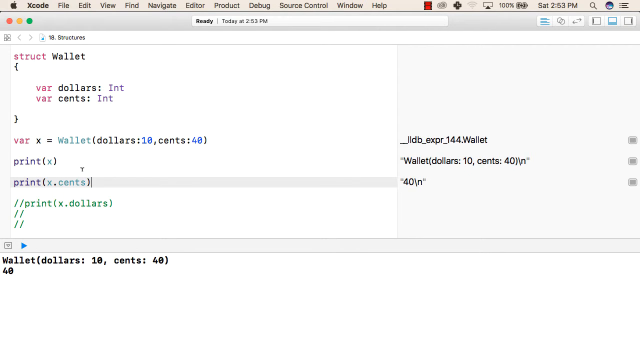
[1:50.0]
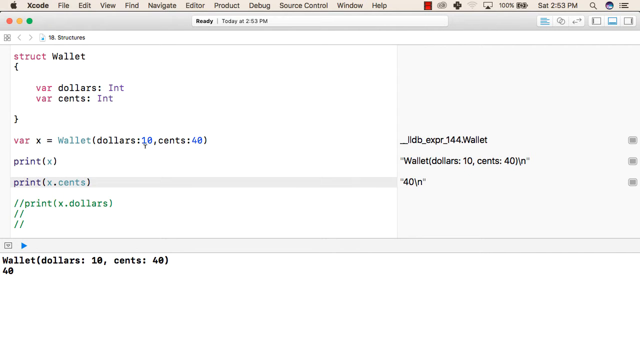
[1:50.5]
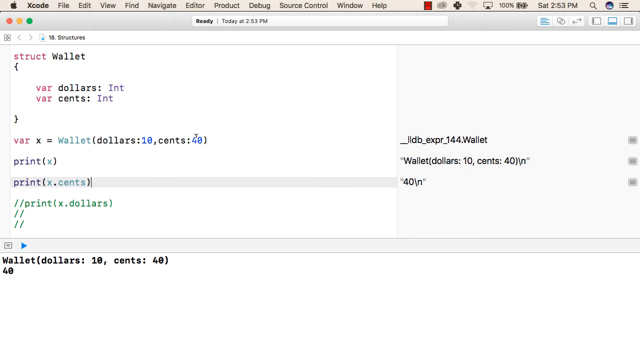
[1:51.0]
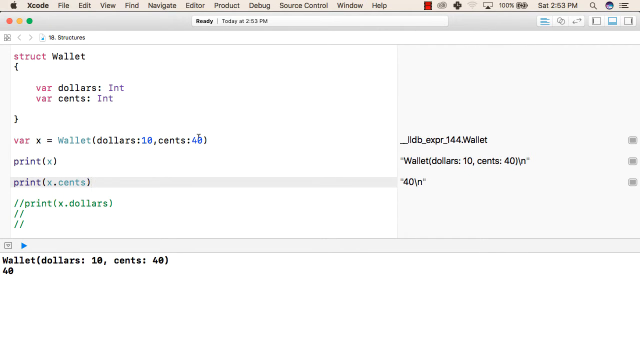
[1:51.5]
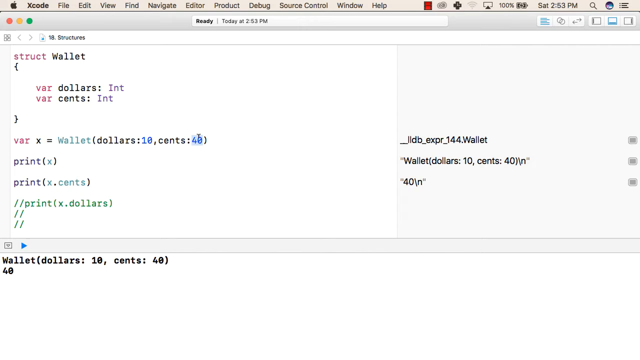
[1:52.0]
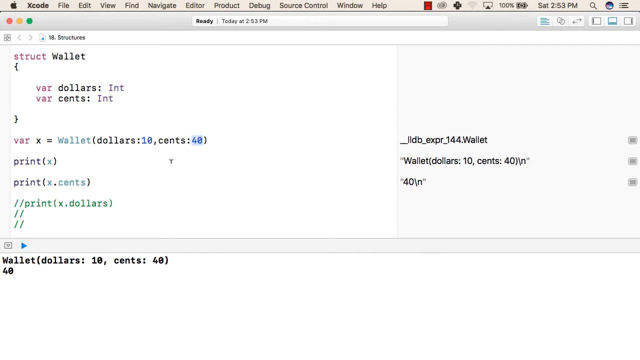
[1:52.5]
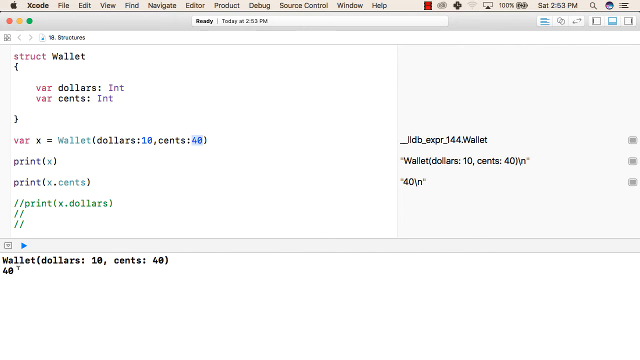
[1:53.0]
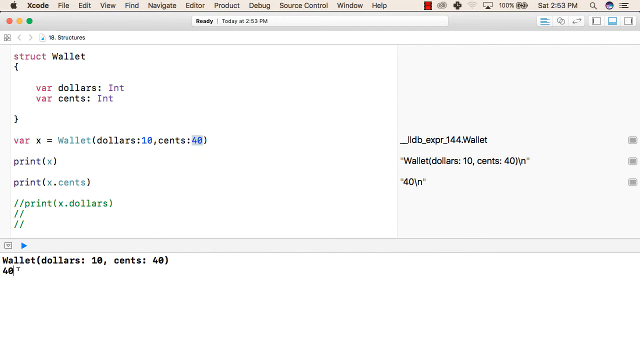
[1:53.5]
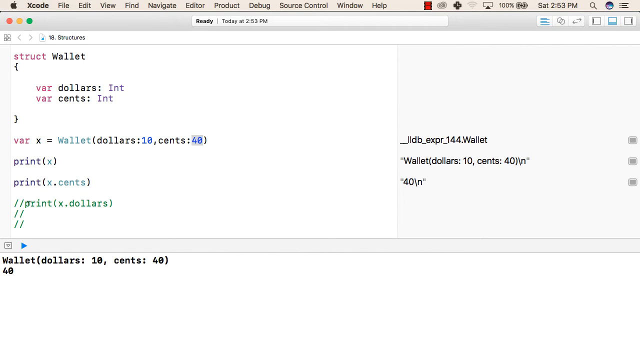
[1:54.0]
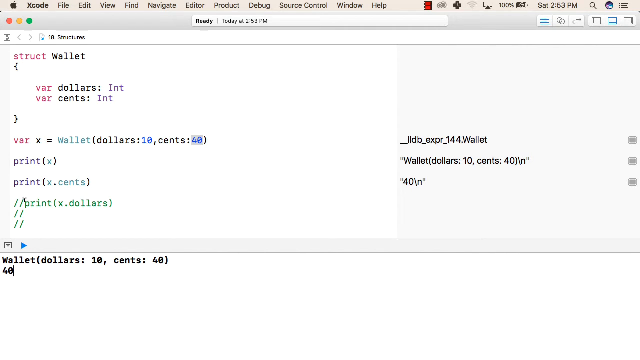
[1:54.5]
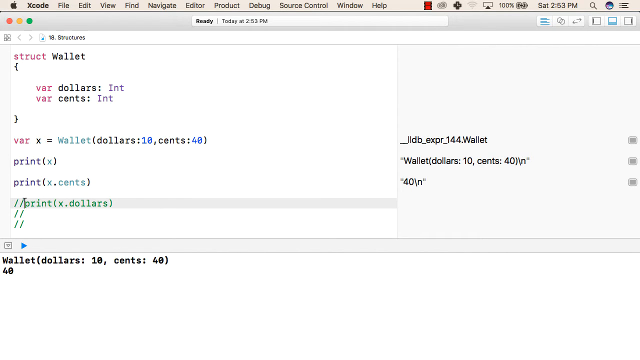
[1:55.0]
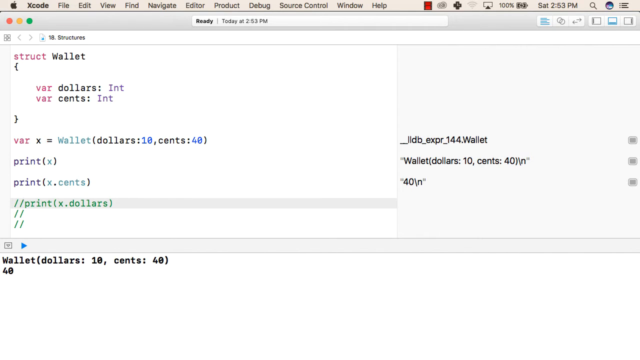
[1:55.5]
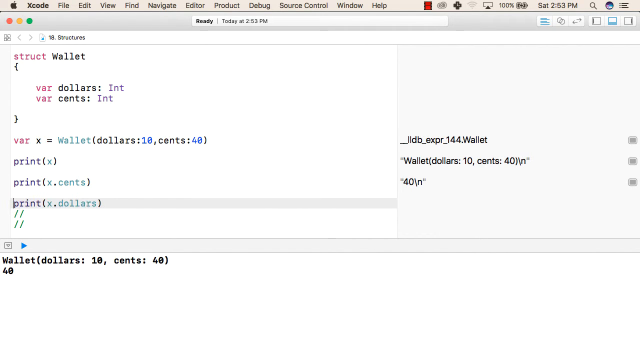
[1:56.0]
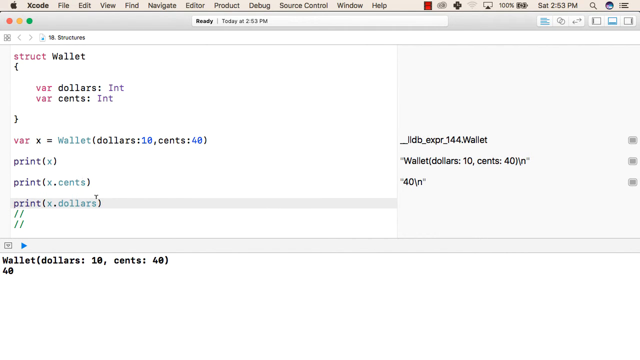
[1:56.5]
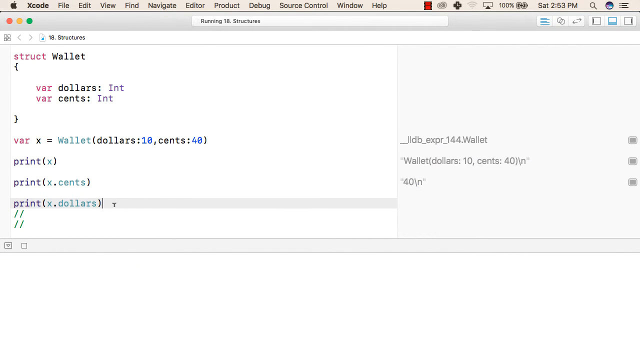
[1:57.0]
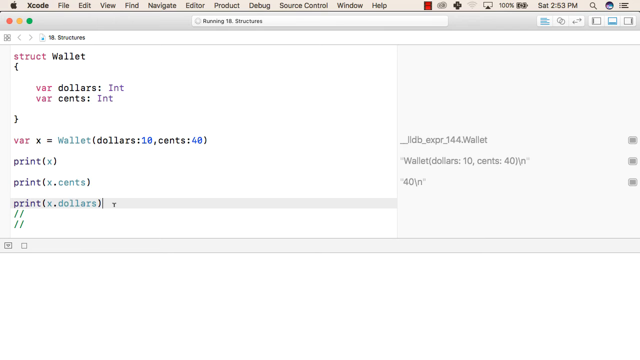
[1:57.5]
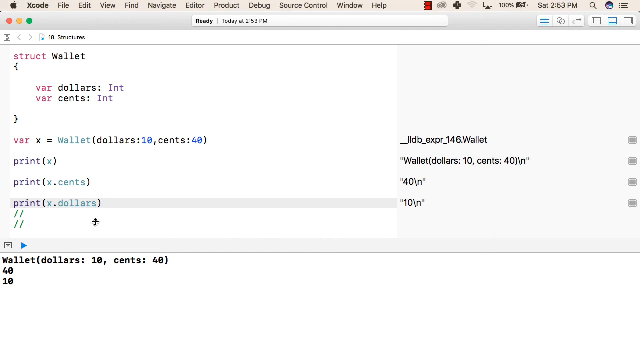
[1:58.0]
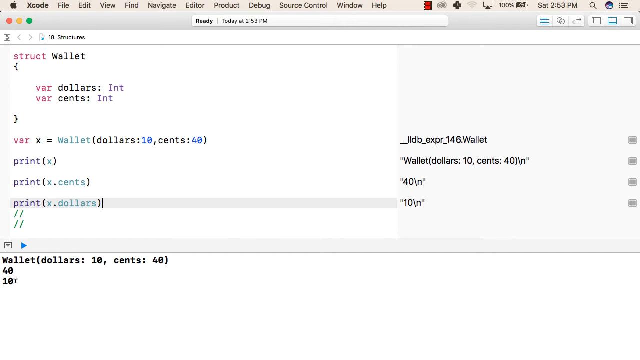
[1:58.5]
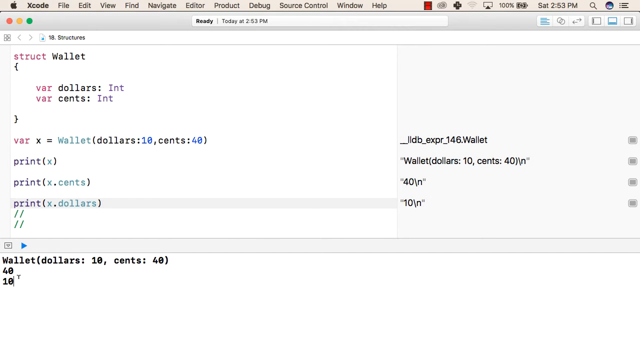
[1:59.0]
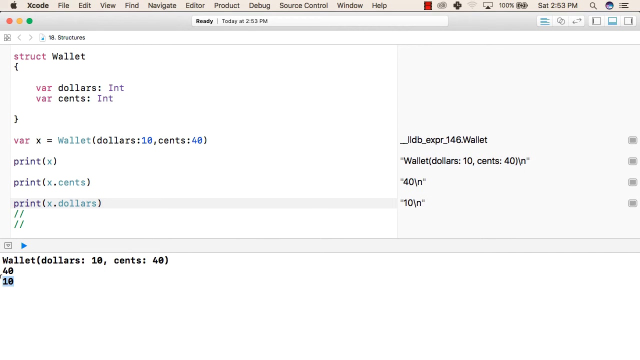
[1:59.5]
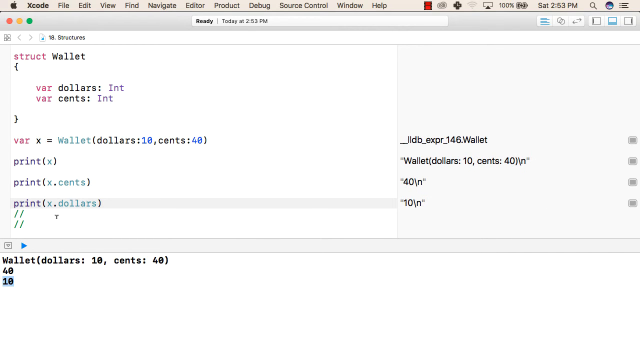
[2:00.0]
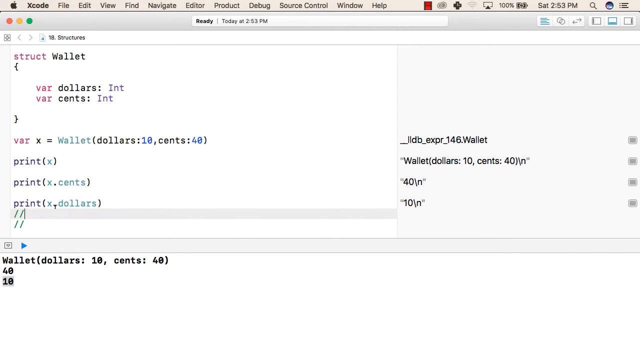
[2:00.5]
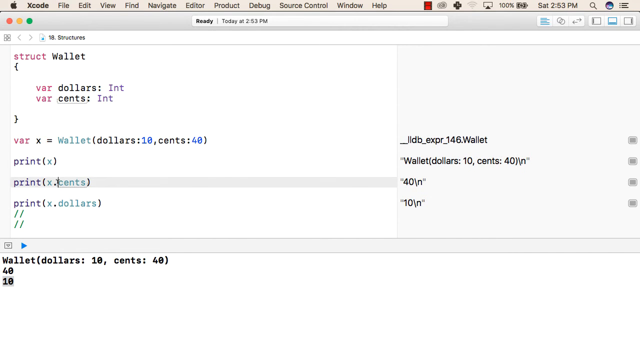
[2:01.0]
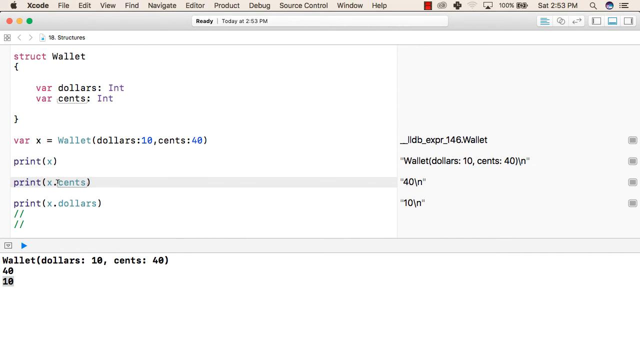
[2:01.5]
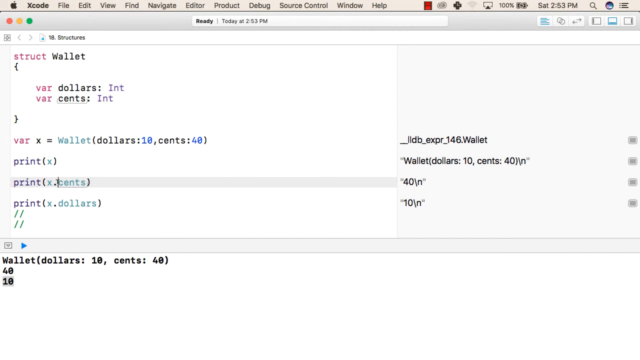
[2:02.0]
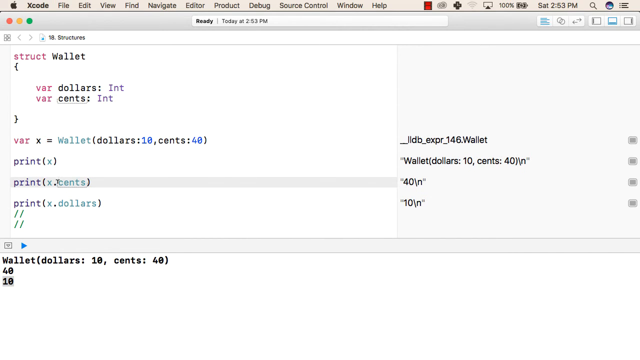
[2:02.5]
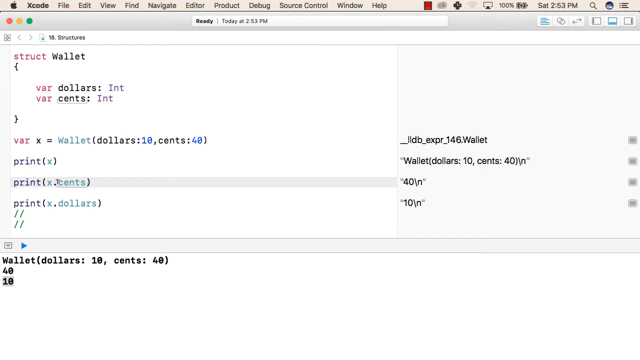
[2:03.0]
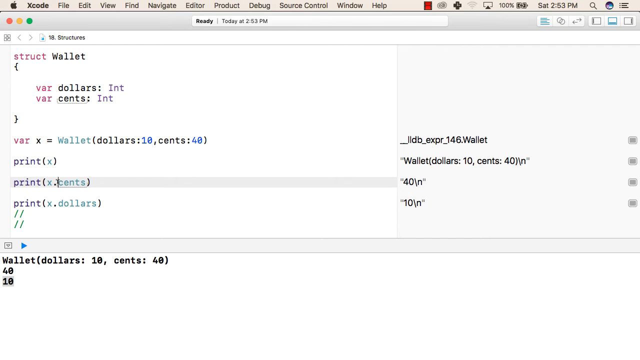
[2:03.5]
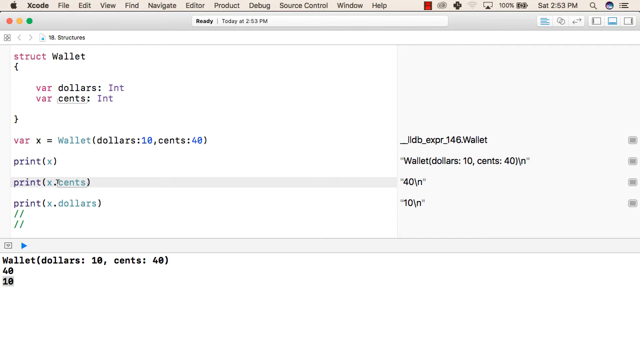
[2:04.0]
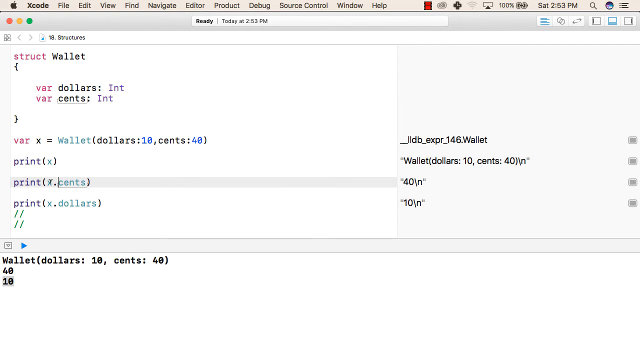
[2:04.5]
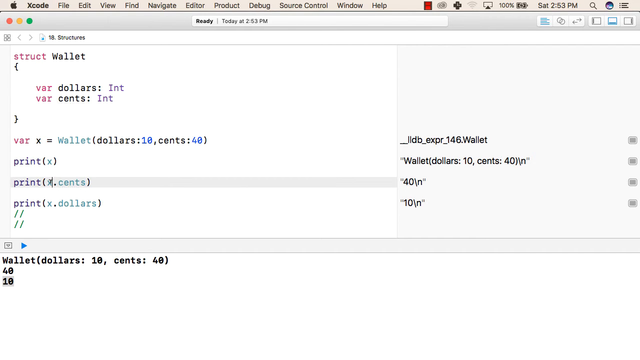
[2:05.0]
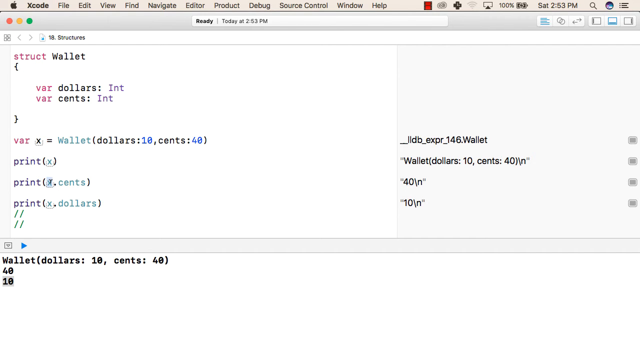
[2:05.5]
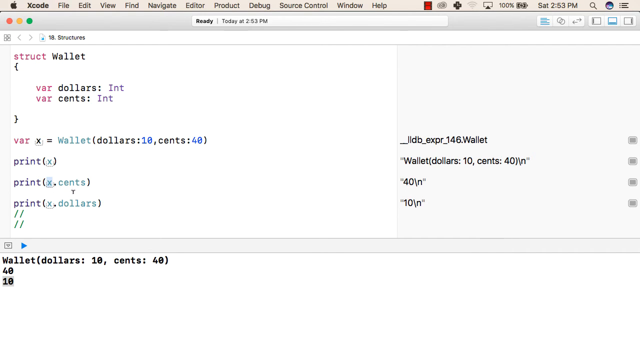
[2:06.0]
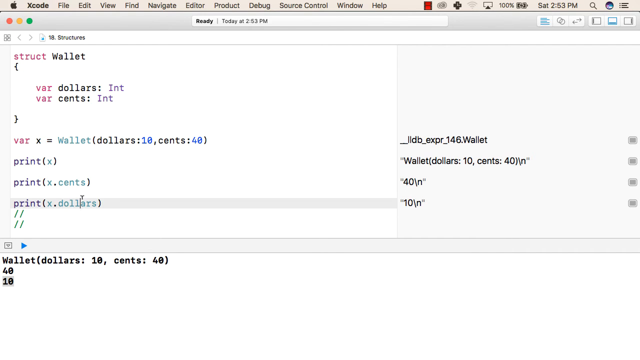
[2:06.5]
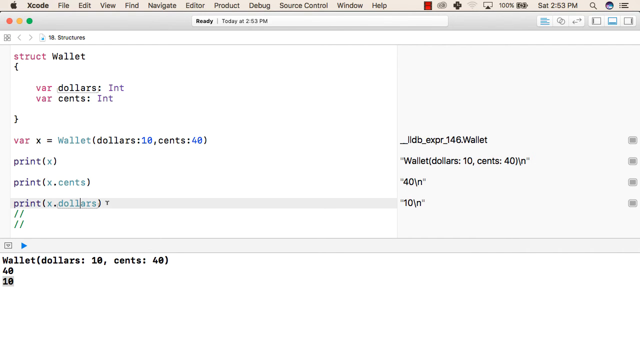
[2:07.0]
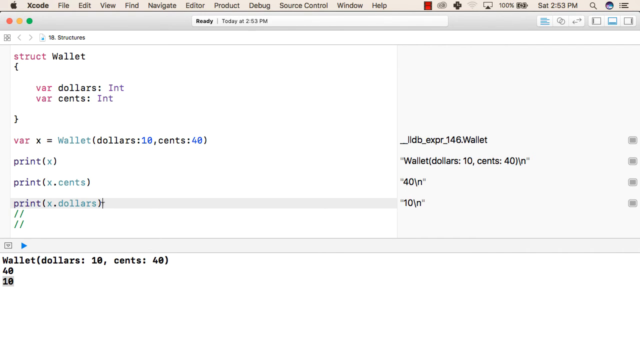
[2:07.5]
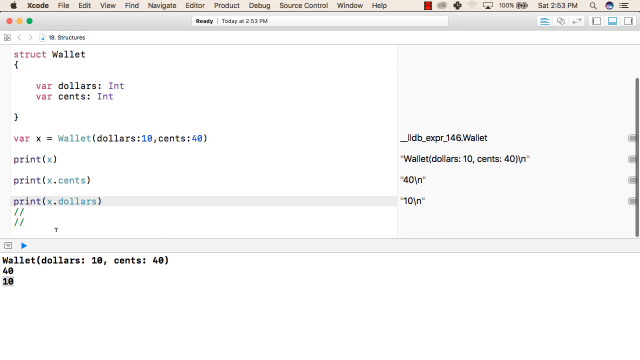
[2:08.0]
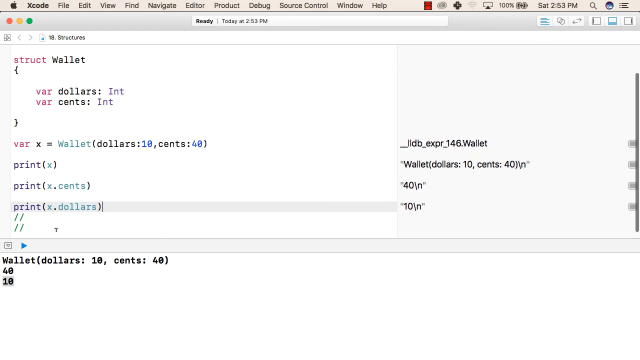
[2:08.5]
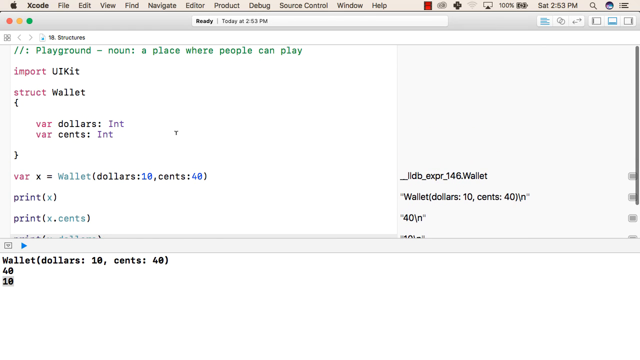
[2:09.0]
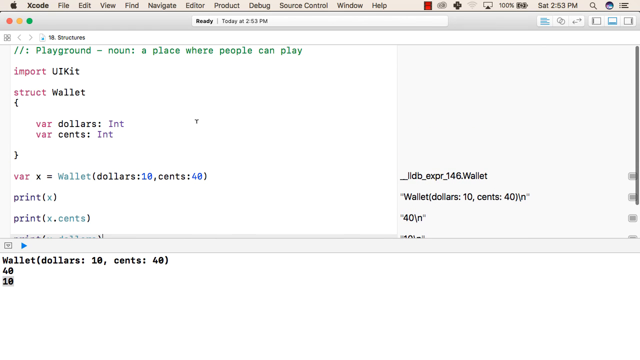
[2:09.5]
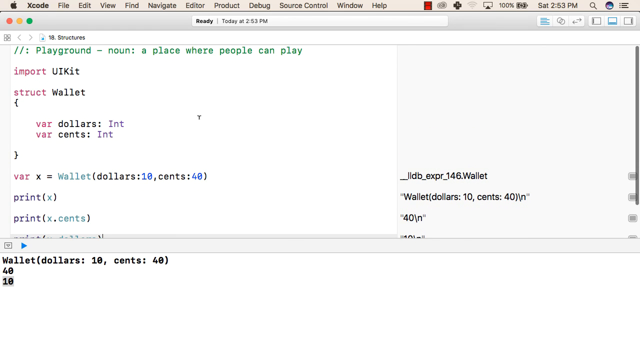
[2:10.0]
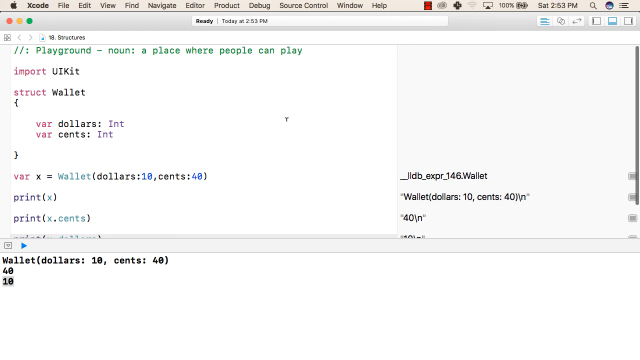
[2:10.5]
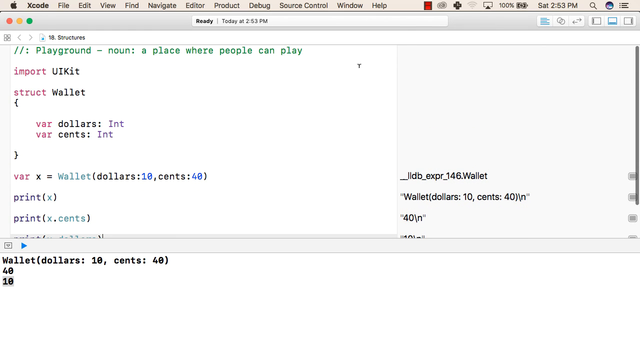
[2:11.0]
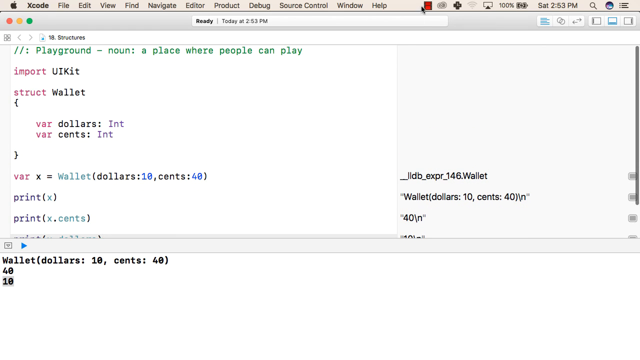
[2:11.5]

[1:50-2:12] A cursor moves around different lines of code. This is possibly Xcode, as the text "Xcode" appears beside an Apple logo in the top left corner. The code has words like wallet, dollars and cents, suggesting it has something to do with payment, and also includes the word "Int", probably meaning the code is for international payments. Values for dollars and cents are visible in the code. As the cursor continues to move around and highlight parts of the code, modifications appear on the screen. The address bar shows the word "Structures", slightly blurred. Navigation texts like File, Edit, View and Find are at the top of the screen. The recording appears to have been made around 2.53pm.